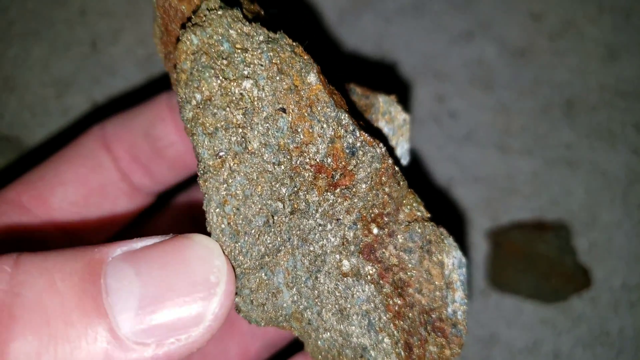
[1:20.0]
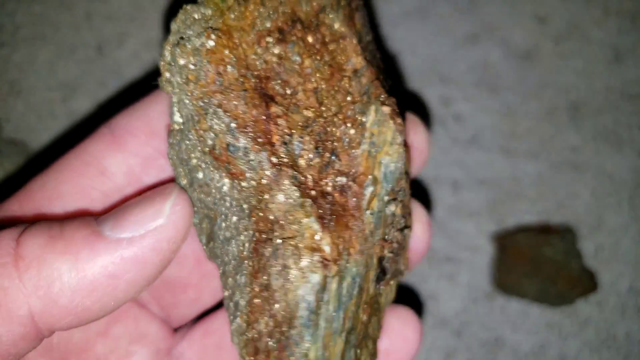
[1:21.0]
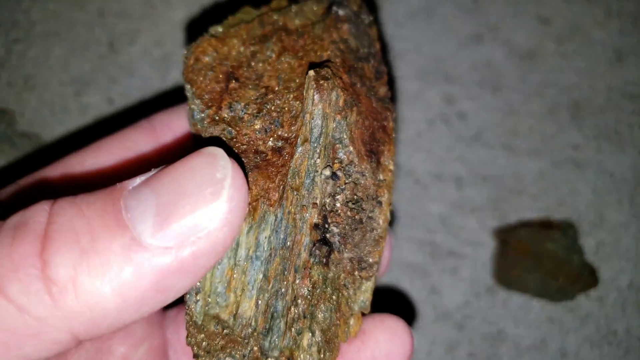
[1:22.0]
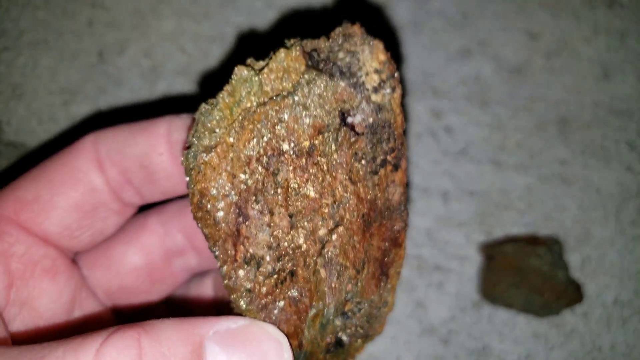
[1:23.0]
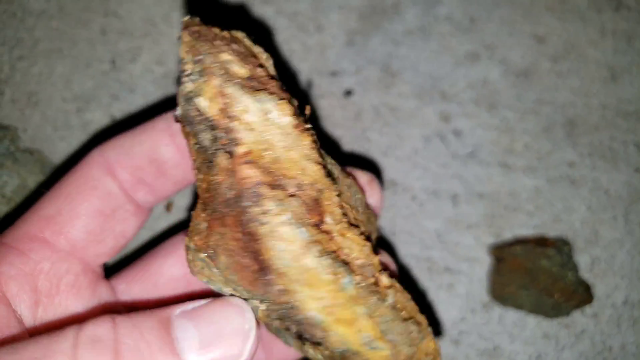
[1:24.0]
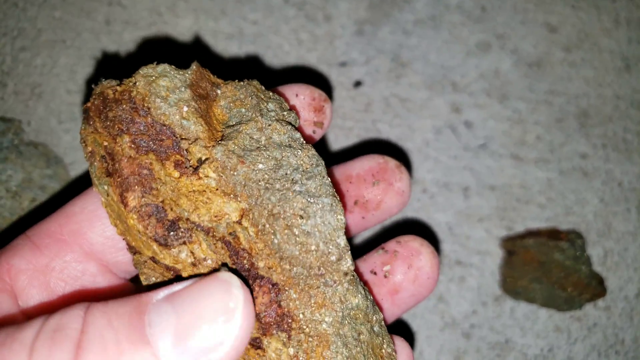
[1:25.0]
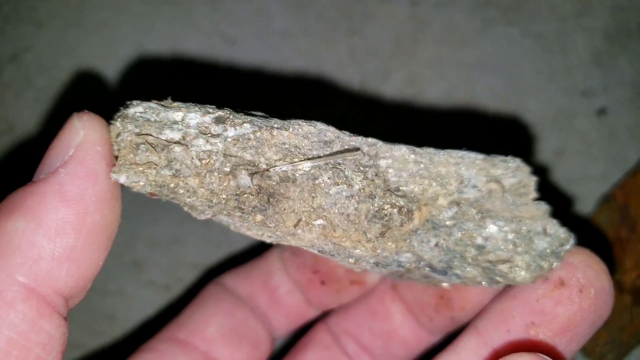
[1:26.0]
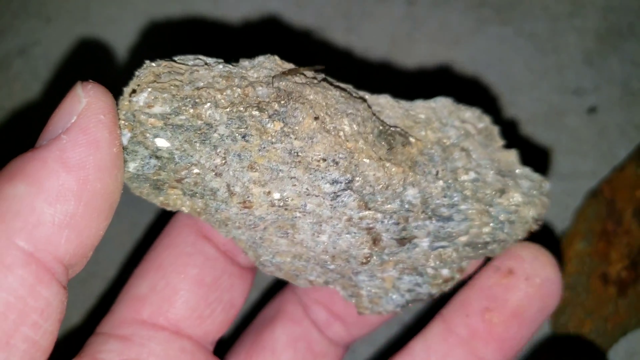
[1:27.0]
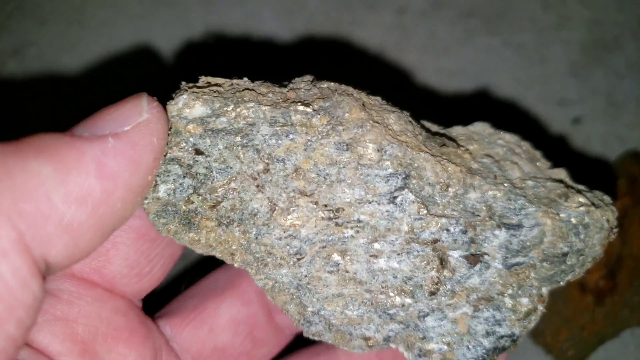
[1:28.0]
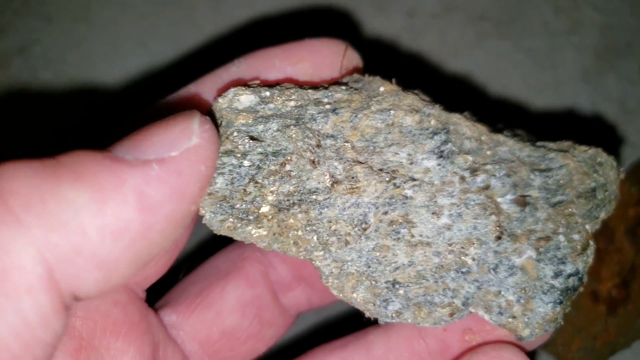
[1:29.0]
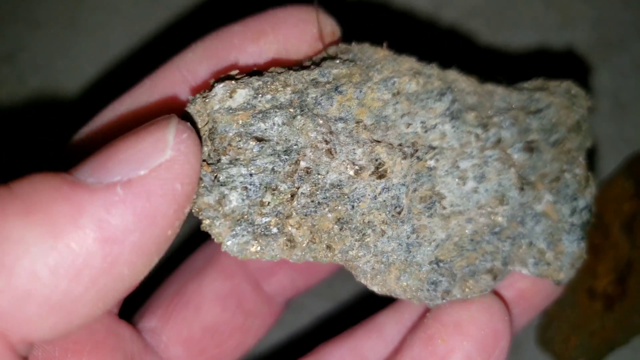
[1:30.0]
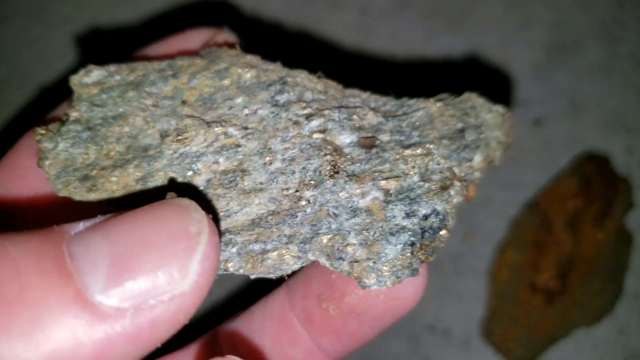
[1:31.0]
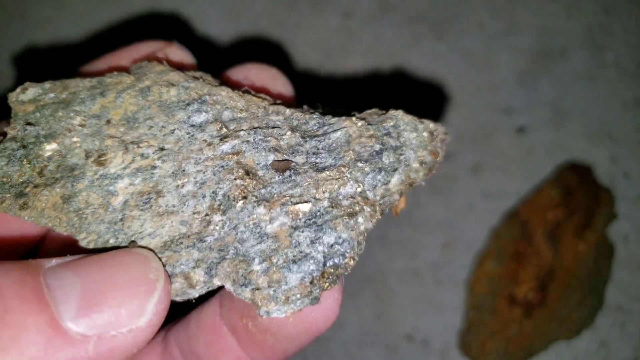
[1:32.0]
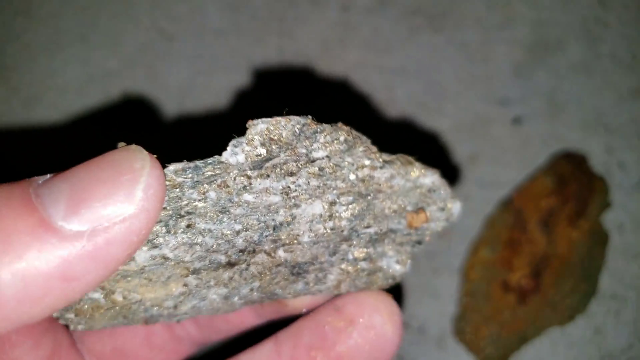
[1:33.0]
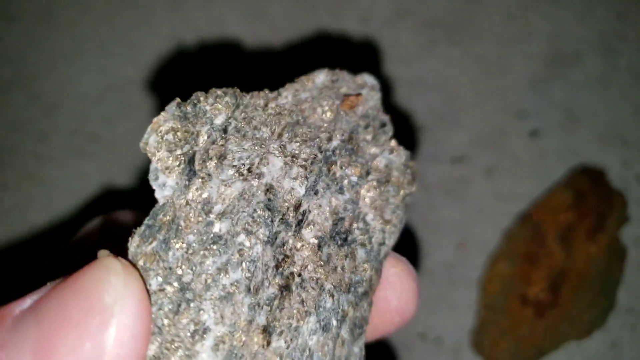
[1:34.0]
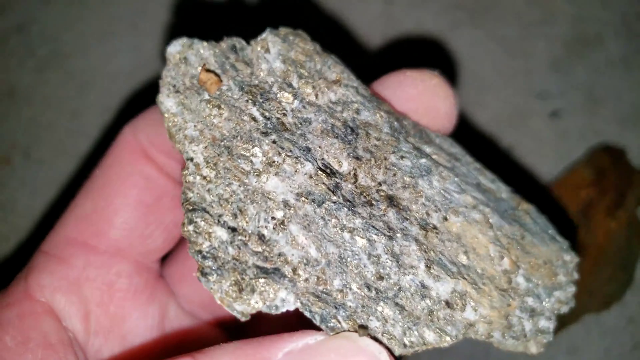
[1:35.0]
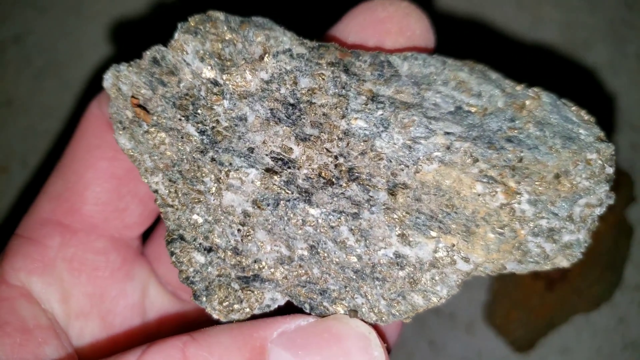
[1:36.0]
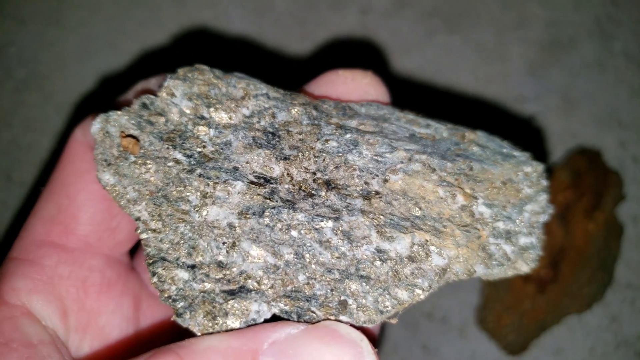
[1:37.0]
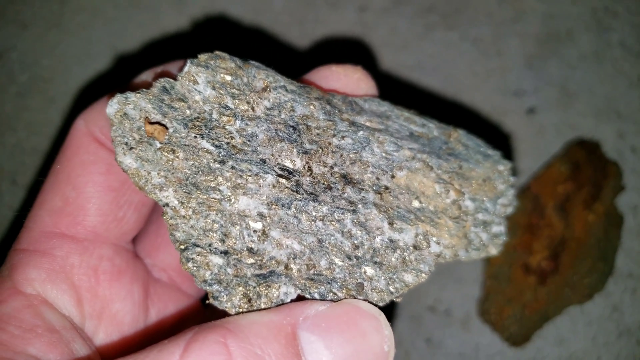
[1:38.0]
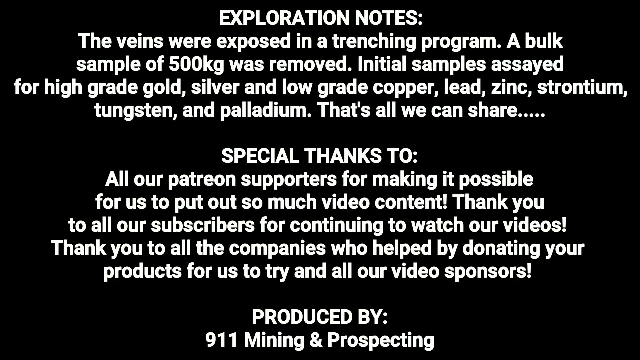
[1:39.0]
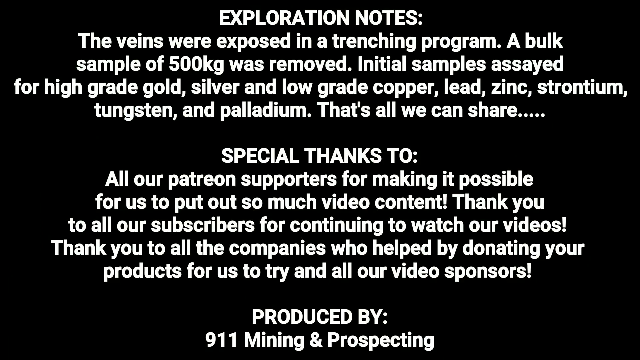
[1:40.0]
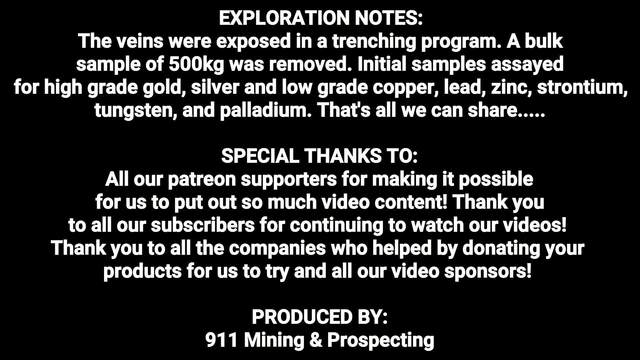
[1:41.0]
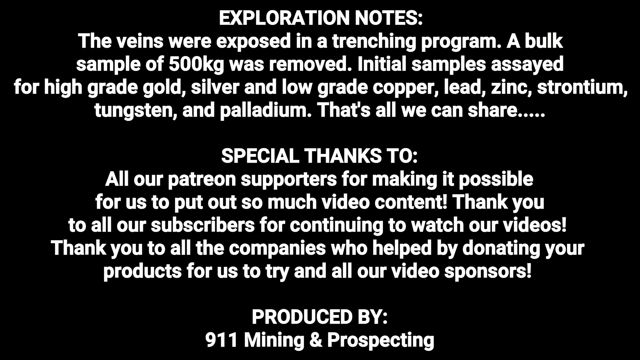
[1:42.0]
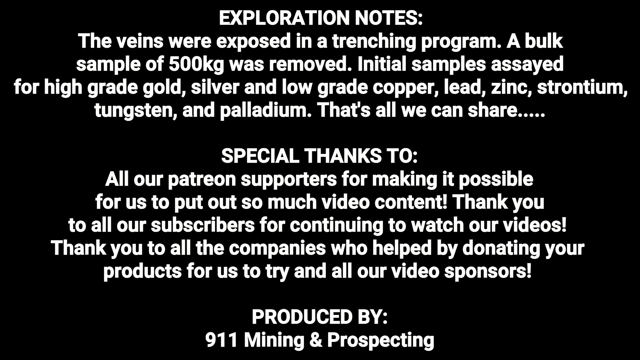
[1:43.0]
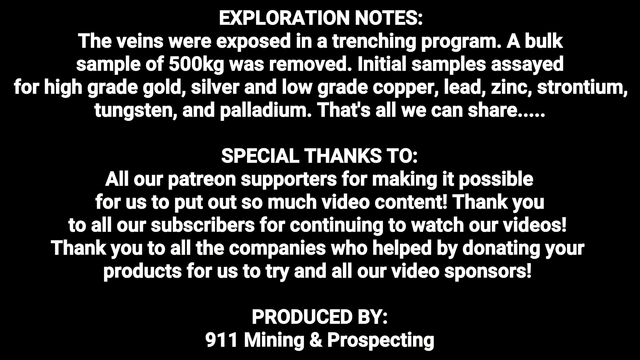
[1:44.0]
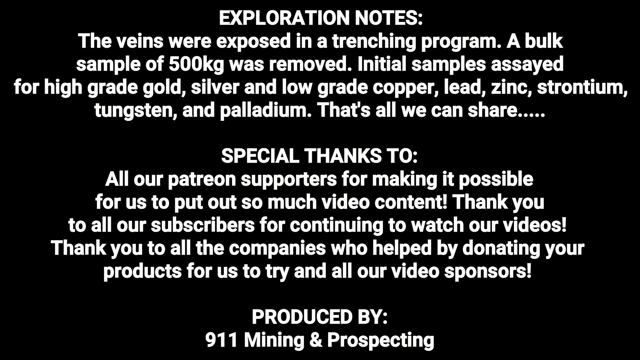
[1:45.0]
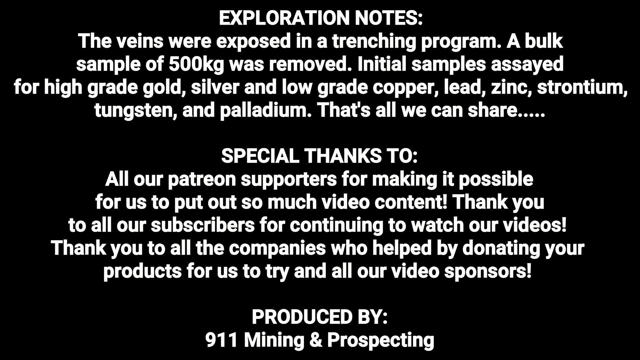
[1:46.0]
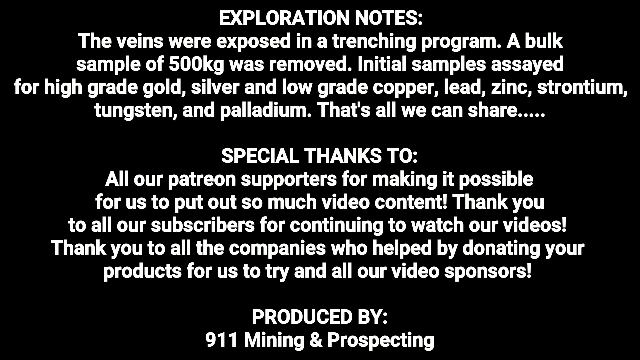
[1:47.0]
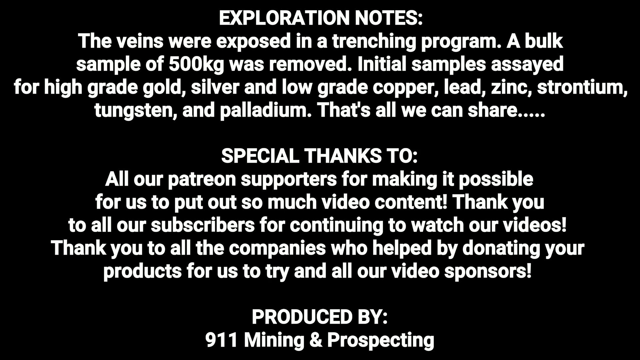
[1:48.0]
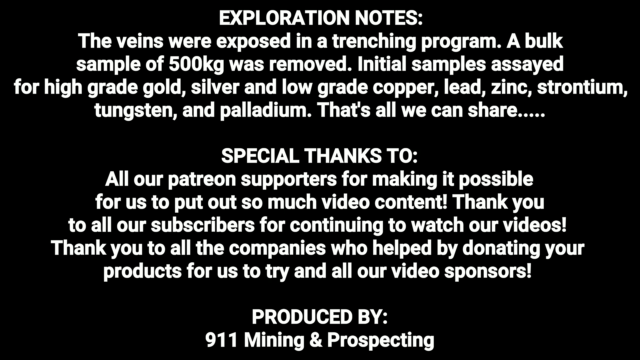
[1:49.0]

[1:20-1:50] Someone's hand, in close-up, holds another rock. As it is turned to the camera, the centre of the rock looks exposed, showing a red or reddish-brown inner core, with stripes ranging from greyer to green and yellow. The rock is quite wide. As it turns, the other side is more yellow and red than the grey-green first side. Next, a more grey-green rock with more of a blue palette is rotated in the person's fingertips; it looks rougher than the previous rock and glitters in the camera light, and at one angle it shows more of a blue tone with greys. Then a title page reads "Exploration notes. The veins were exposed in a trenching program. A bulk sample of 500 kg was removed. Initial samples are saved for high-grade gold, silver, and low-grade copper, lead, zinc, strontium, tungsten, and palladium. That's all we can share. Special thanks to all our Patreon supporters for making it possible for us to put out so much video content. Thank you to all subscribers for continuing to watch our videos. Thank you to all the companies who help by donating your products for us to try. And for all our video sponsors, produced by 9-1-1 Mining and Prospecting."